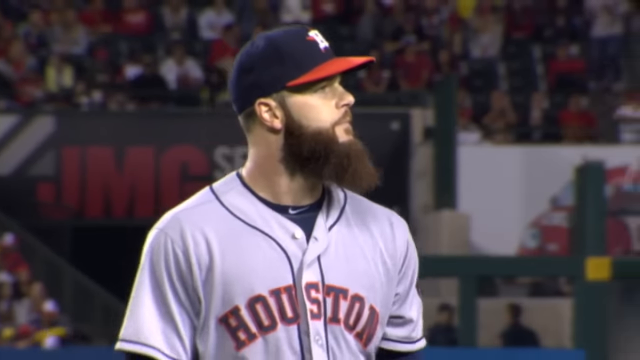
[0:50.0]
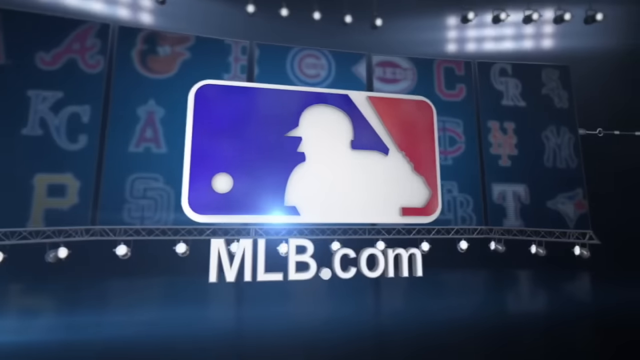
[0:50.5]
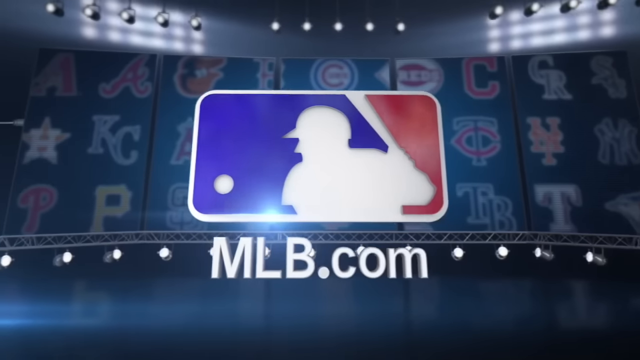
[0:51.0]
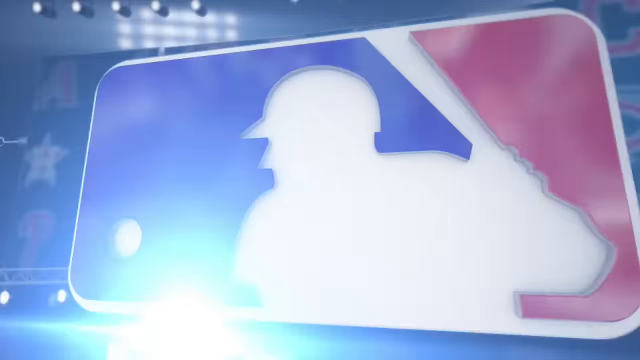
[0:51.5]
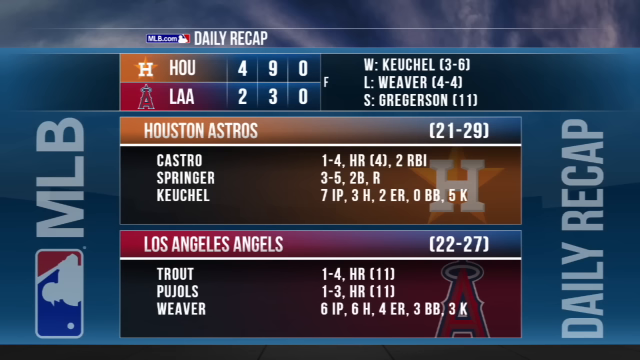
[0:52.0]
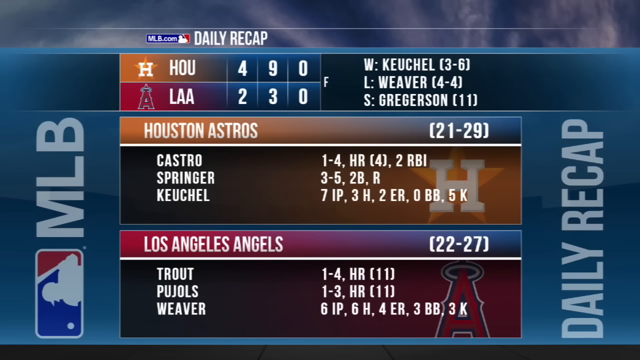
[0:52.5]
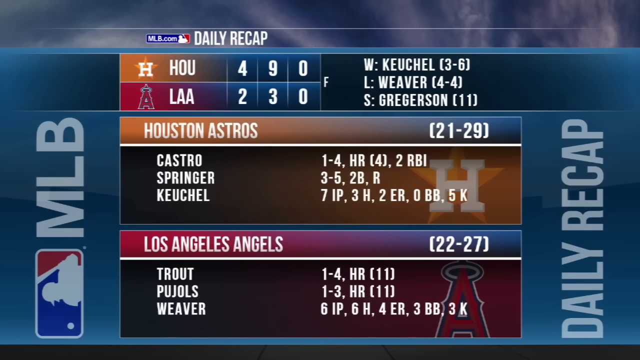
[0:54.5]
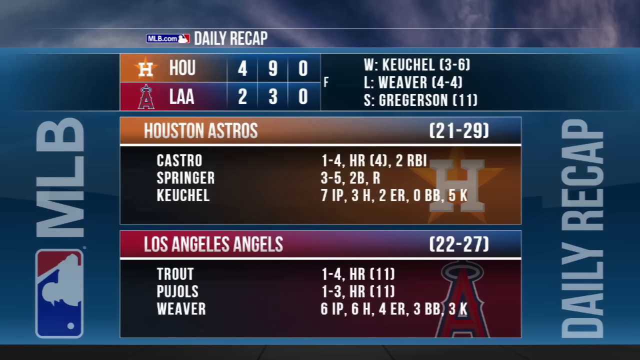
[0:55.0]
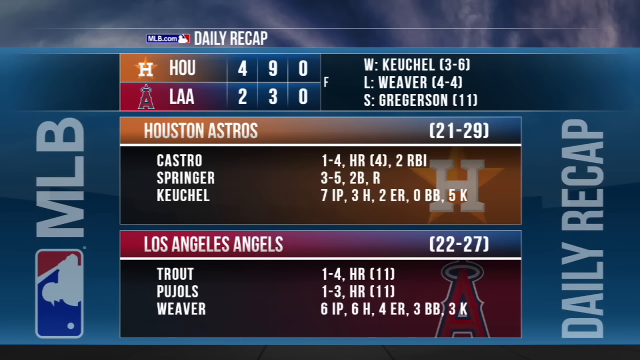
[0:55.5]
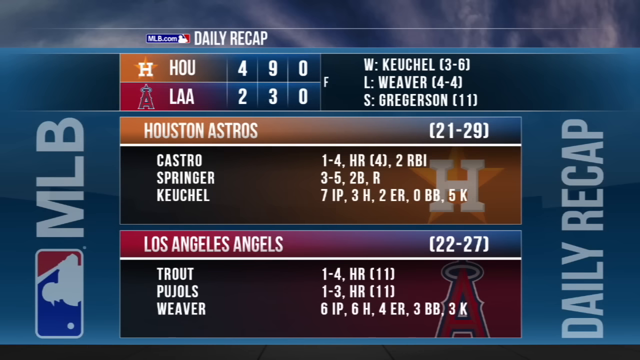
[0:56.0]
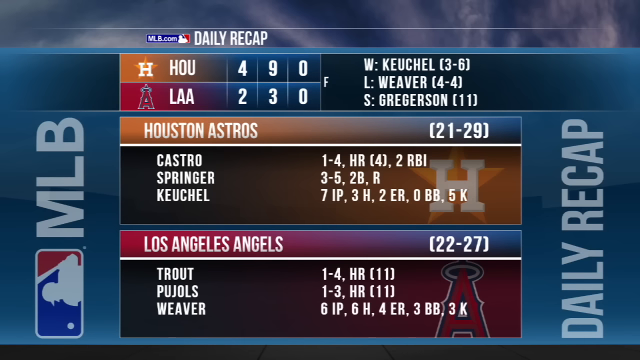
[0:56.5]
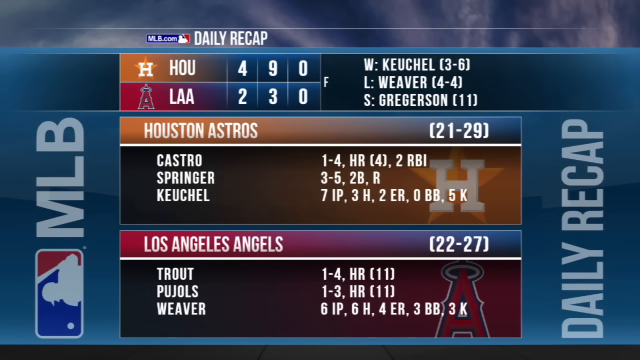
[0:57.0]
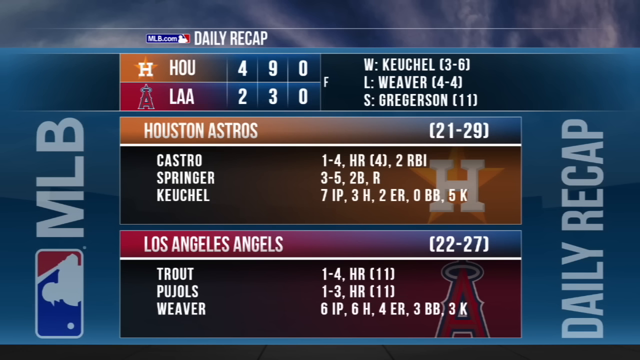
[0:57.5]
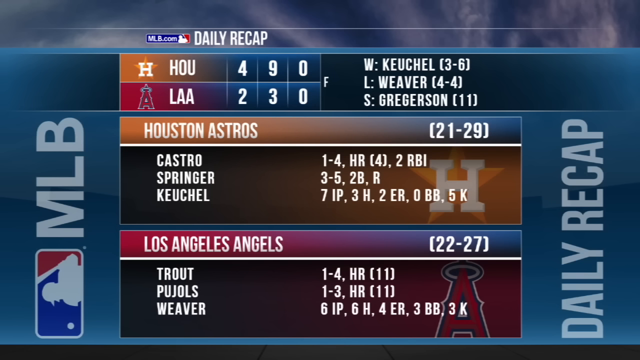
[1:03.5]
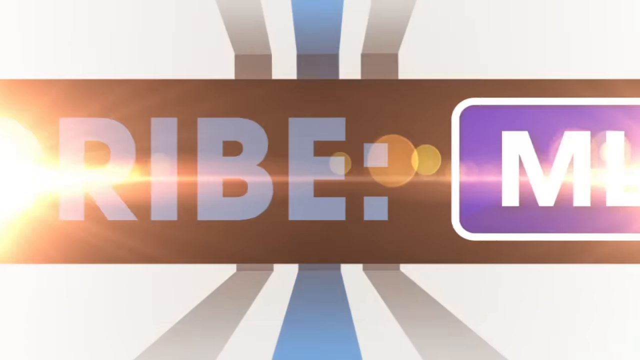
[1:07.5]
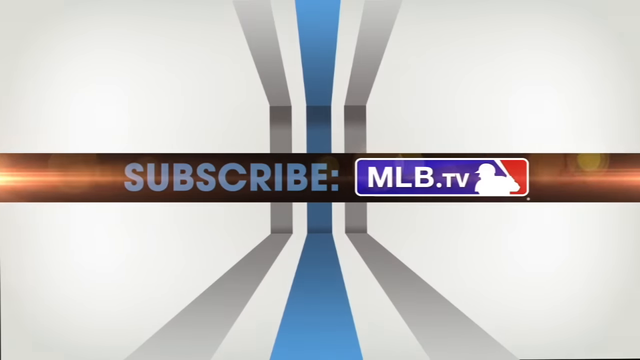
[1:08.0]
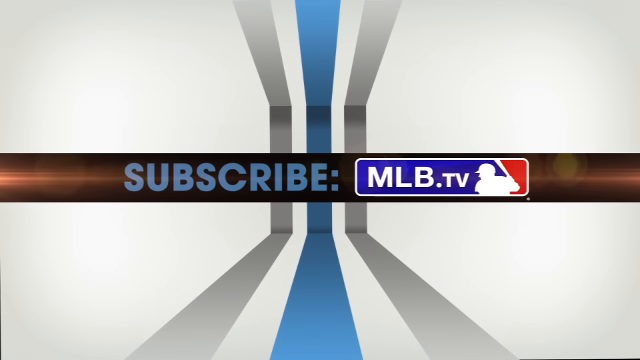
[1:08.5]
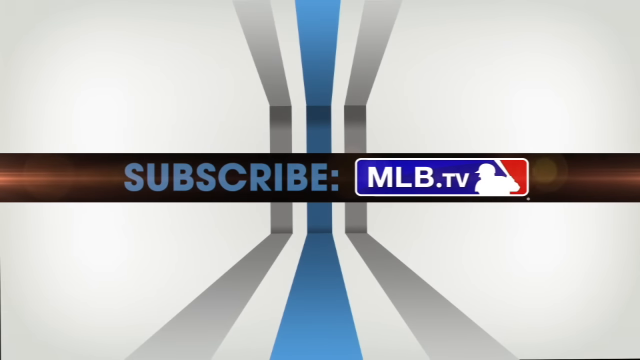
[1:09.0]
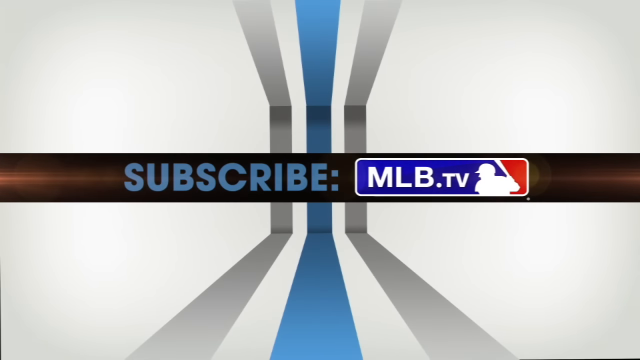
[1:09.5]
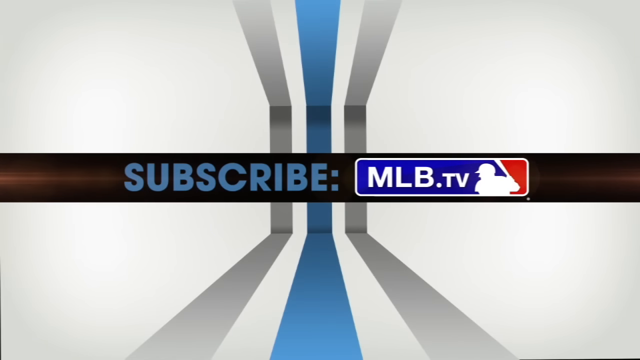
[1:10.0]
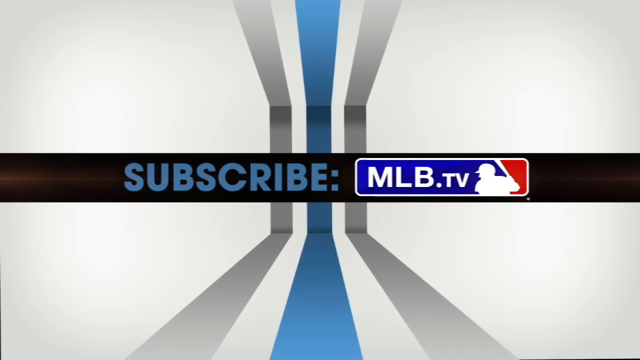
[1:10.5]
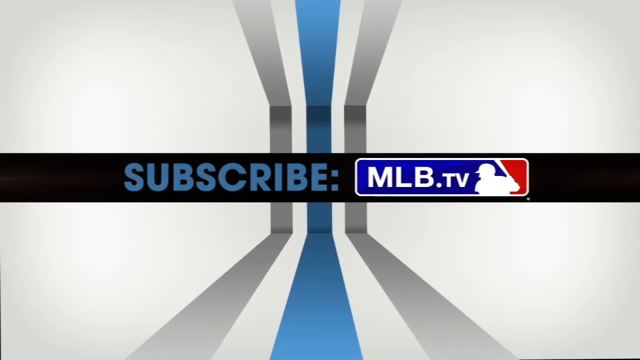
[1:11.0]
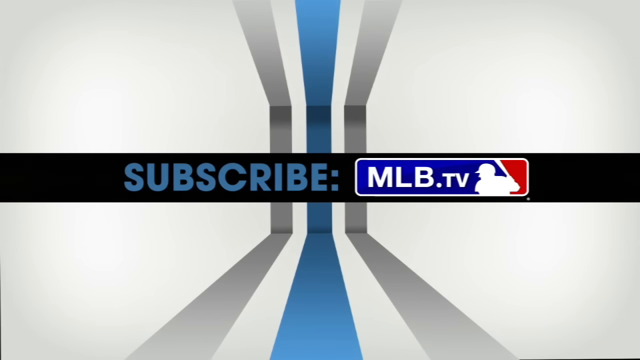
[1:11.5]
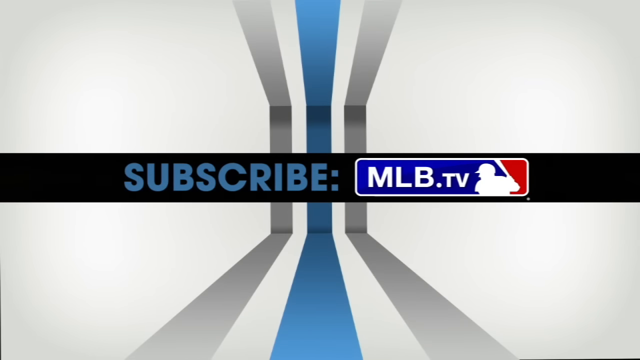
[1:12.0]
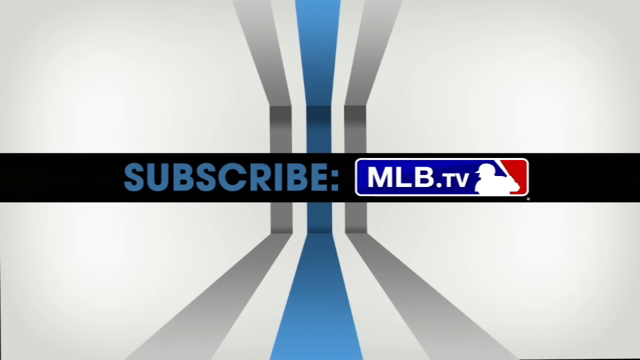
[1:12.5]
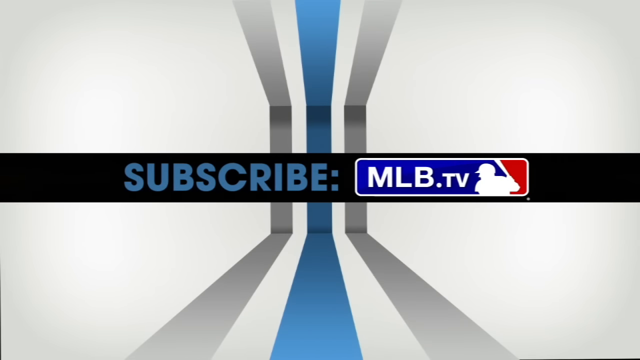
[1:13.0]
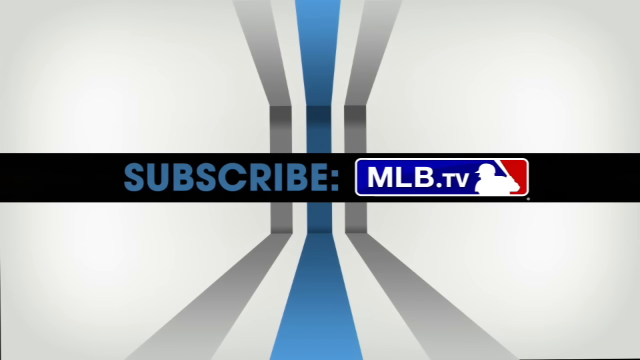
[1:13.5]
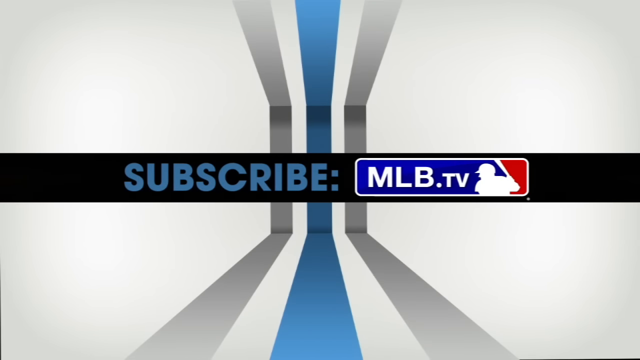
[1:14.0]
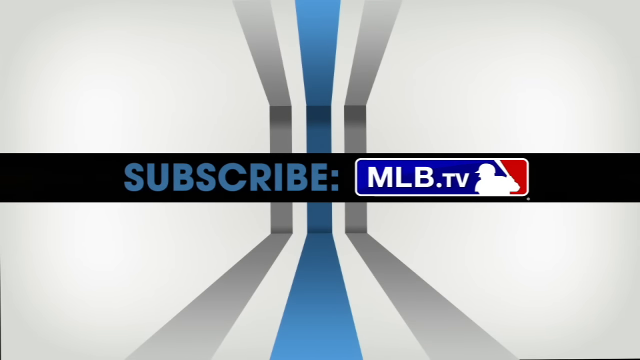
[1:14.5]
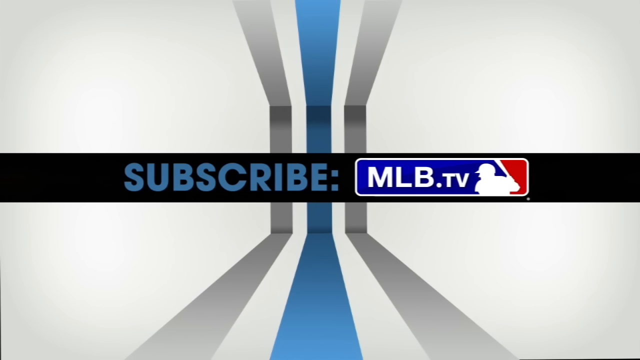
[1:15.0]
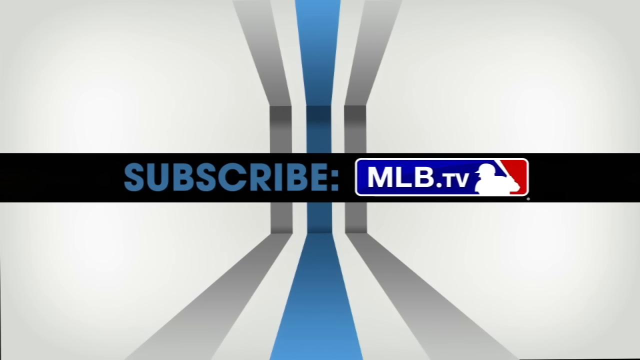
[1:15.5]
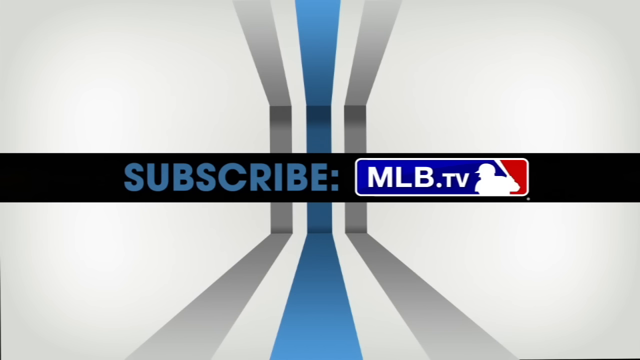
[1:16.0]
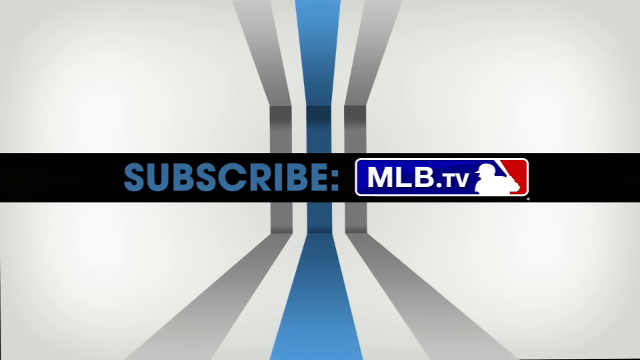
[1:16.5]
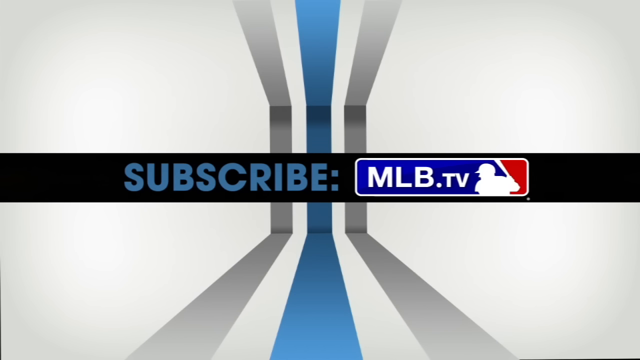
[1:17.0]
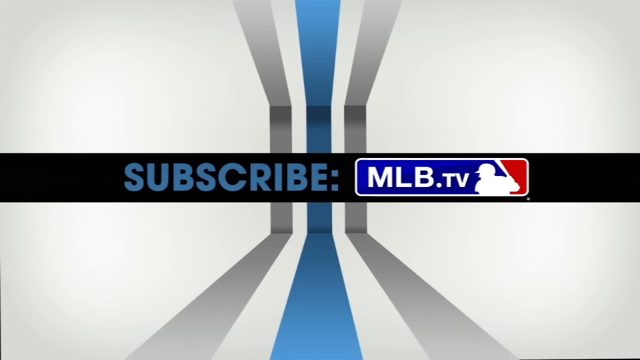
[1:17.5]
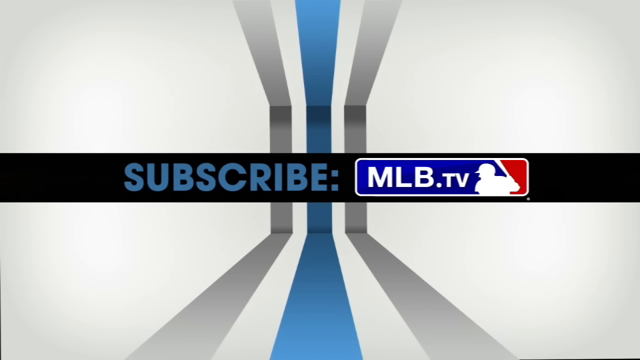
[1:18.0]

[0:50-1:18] An MLB.com logo in red, white, and blue appears, with a board of different MLB team logos behind it. The scene changes to a scoreboard recap of the game showing that Houston beat the Los Angeles Angels 4-2, with the Houston Astros at 21-29 on the season and the Los Angeles Angels at 22-27. It lists a player named Castro going 1-4 with one home run and two RBIs, and a player on the Angels named Trout going 1-4 with a home run. This stays on screen for a few moments before transitioning to a new graphic: a black banner with an orange light on it moves to the middle of the screen. Blue text on it reads "subscribe", and to its right is the MLB.TV logo in red, white, and blue. Three stripes run through the background, one gray, one blue, and one gray, over a light gray gradient background.